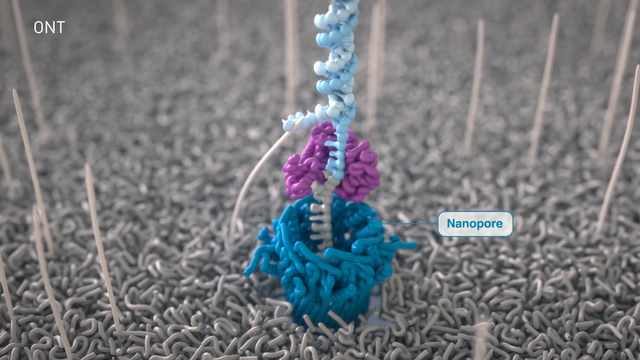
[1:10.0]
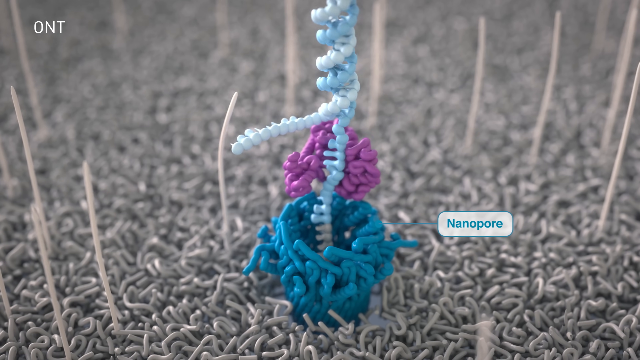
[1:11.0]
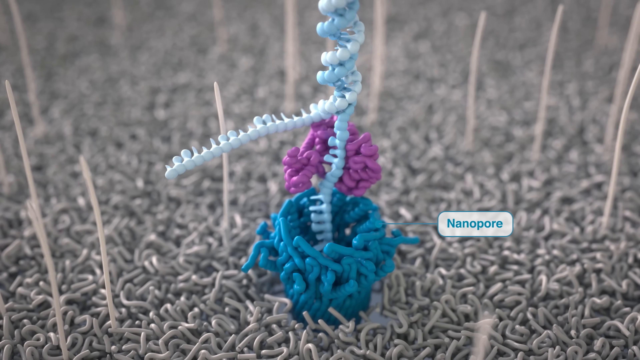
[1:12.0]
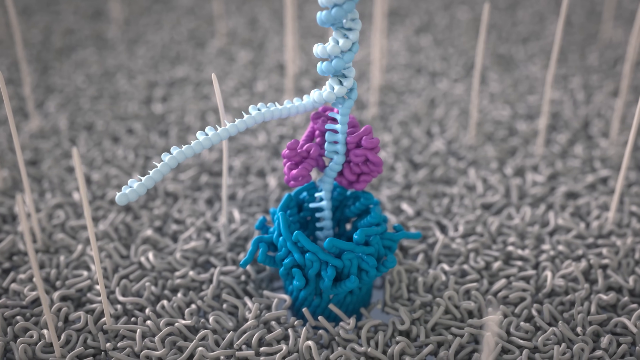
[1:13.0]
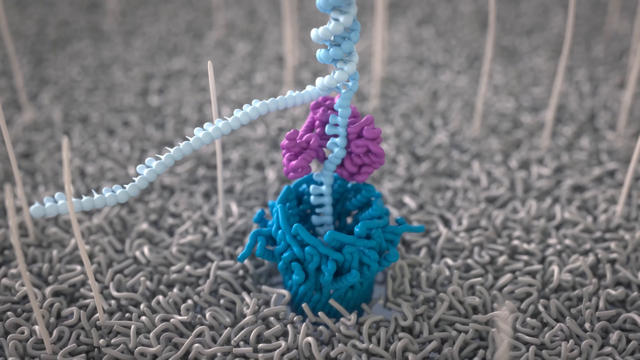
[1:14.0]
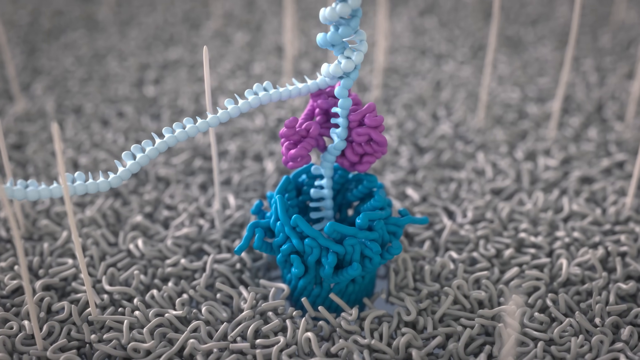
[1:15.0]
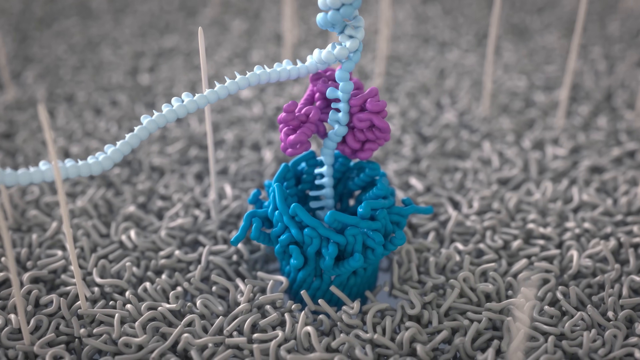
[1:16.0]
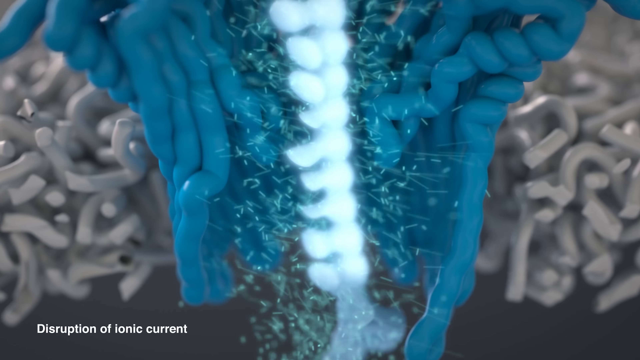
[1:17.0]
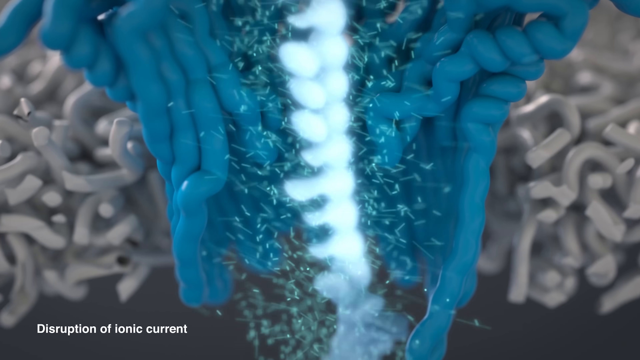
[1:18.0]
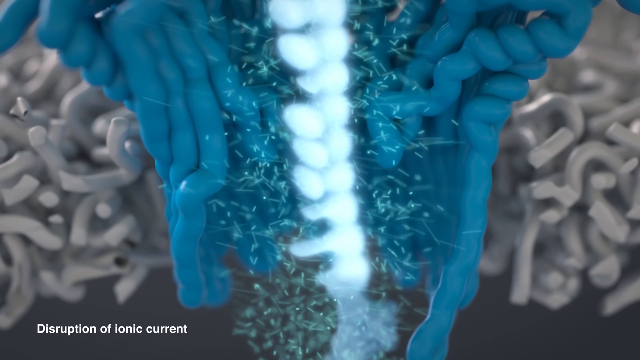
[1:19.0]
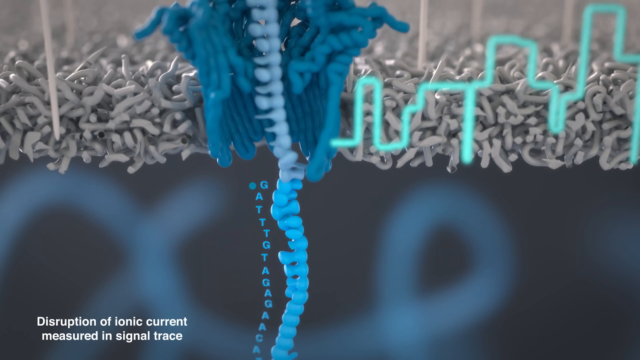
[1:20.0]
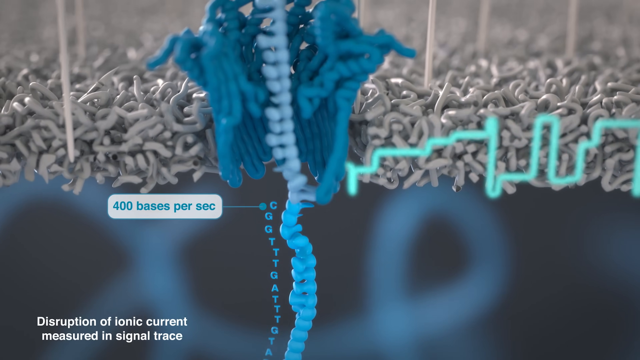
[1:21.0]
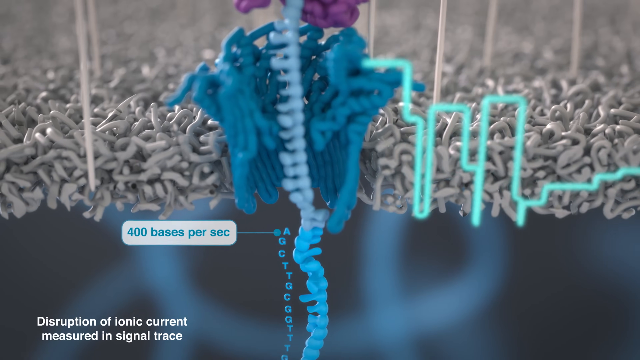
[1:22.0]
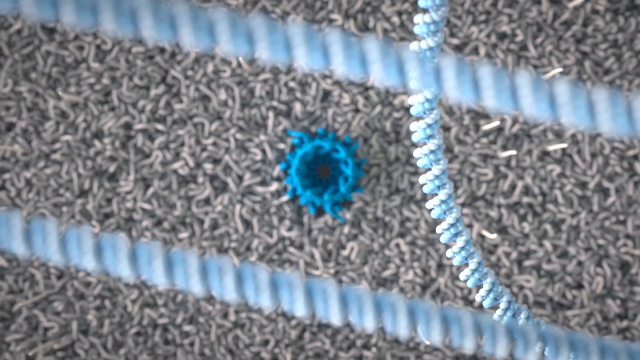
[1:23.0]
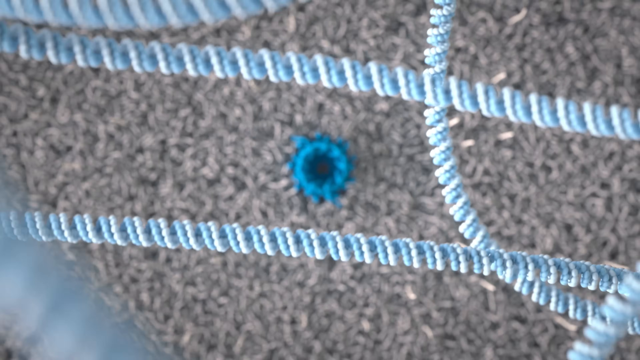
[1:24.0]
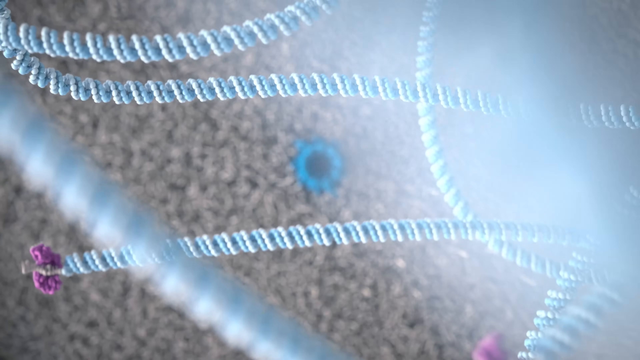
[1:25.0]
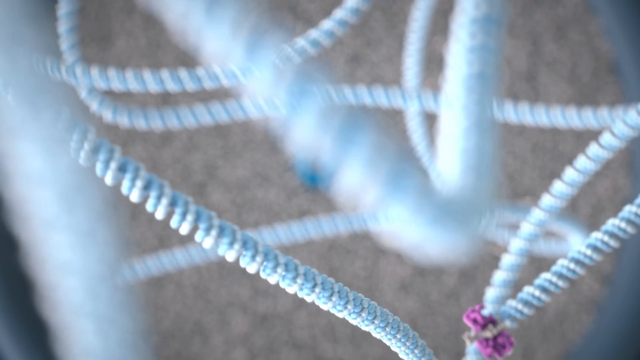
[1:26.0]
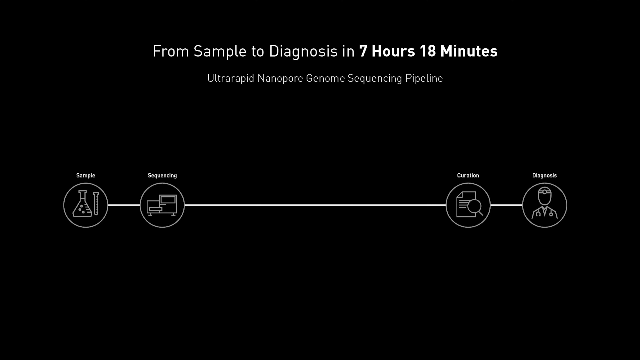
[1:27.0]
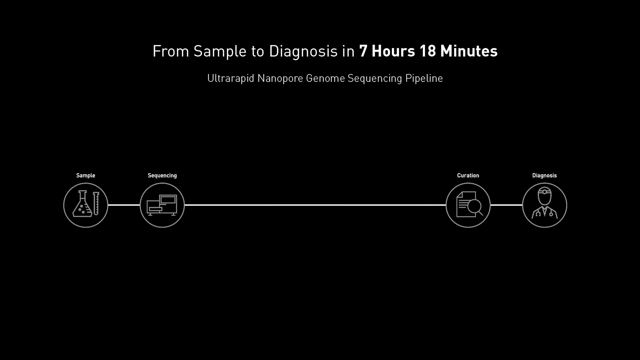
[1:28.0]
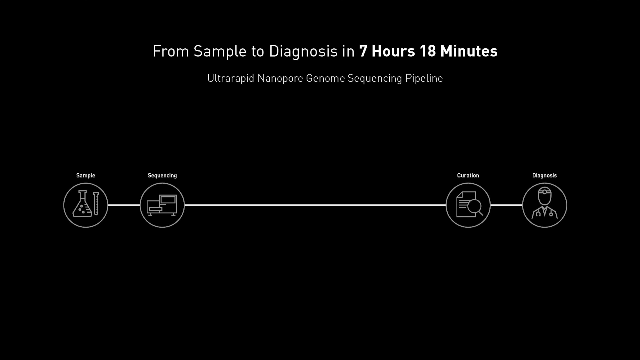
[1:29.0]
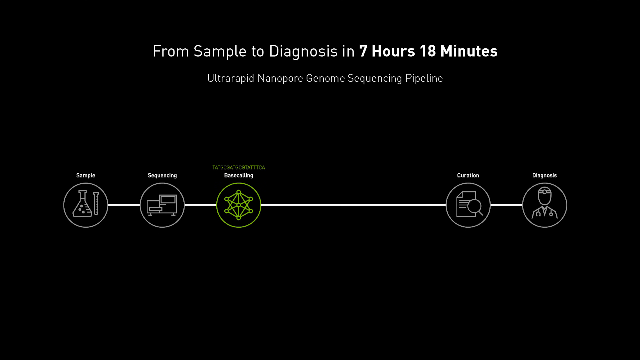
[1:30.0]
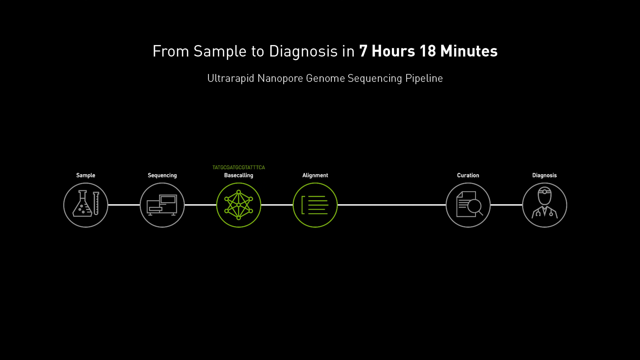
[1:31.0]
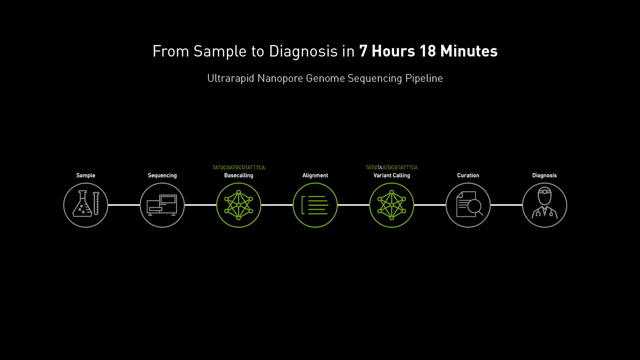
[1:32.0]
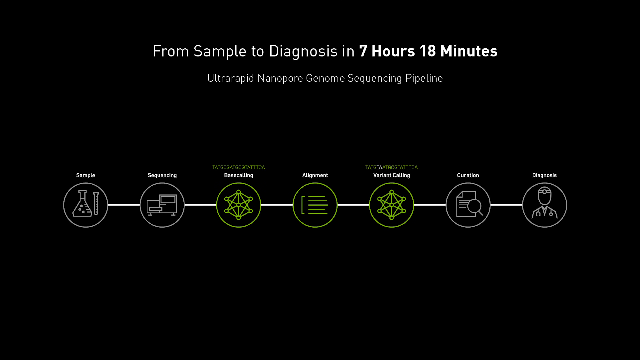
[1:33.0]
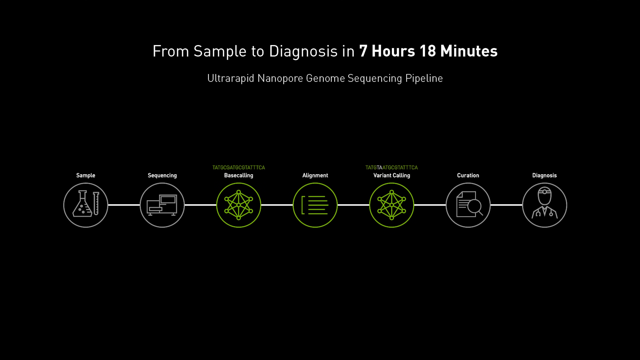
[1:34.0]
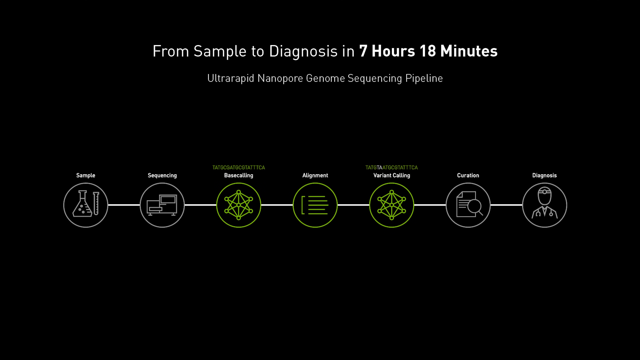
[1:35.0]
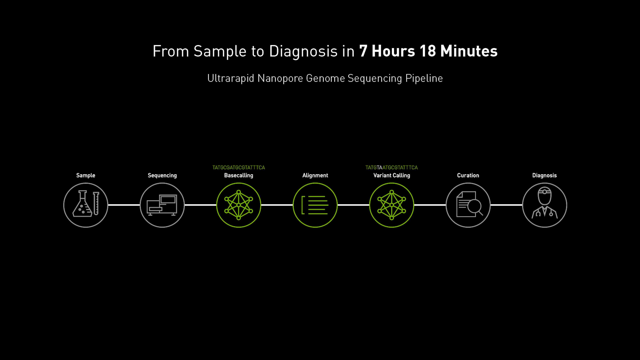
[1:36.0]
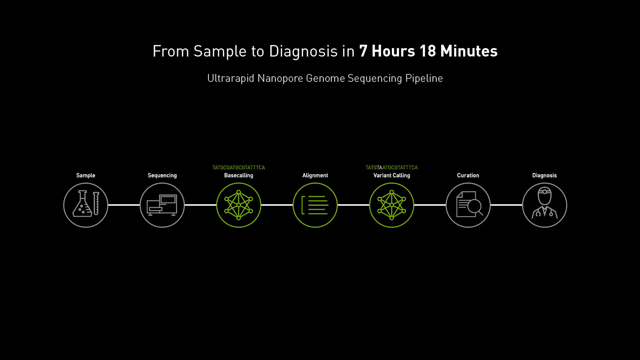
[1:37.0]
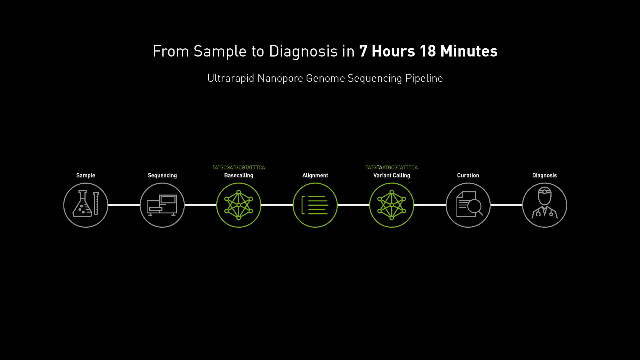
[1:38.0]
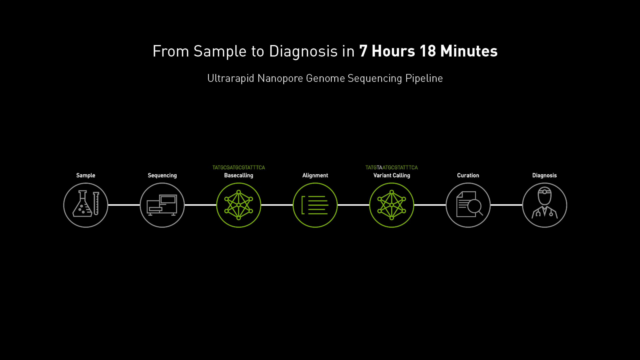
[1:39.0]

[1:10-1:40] The word "nanopore" appears off to the right in blue lettering with a little white box. A line points to a bottom part that looks kind of like spaghetti strands or clay formed into a ball. It points at a very dark blue cluster with a light blue kind of spine stemming from it. Little white beads grow off to the left of that and are wrapped around the light blue chain. There also looks to be some kind of beige material that kind of looks like carpet but is the same type of material as the rest of the DNA chain, and it keeps growing. The view closes up on the blue and white, showing how it is being built, with the text "GATTTGTAGAGAA" and "400 bases per second." A number of other DNA strands follow. Then text reads "from sample to diagnosis in seven hours, 18 minutes" and "Ultra Rapid Nanopore Genome Sequencing Pipeline," with "Sample" and "Sequencing" listed, and then the gaps are filled in with text including "alignment and variant calling."